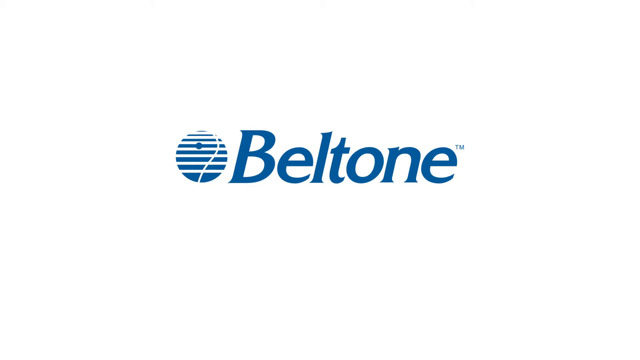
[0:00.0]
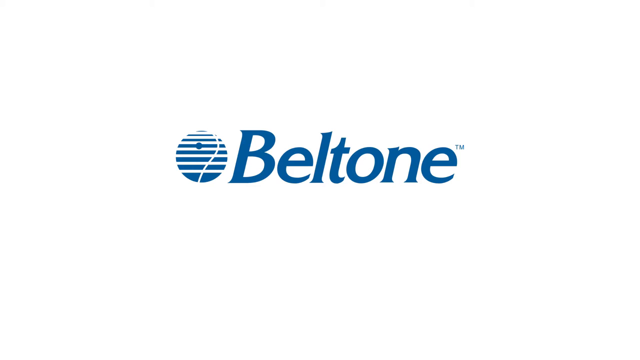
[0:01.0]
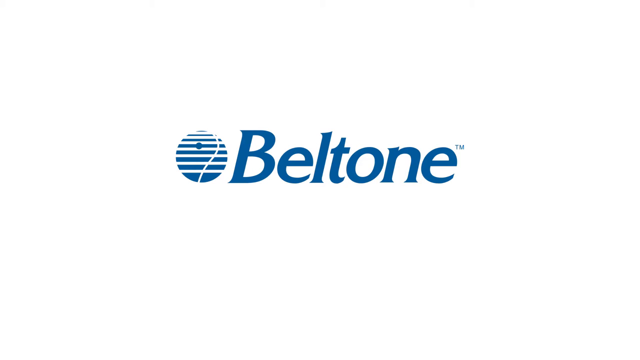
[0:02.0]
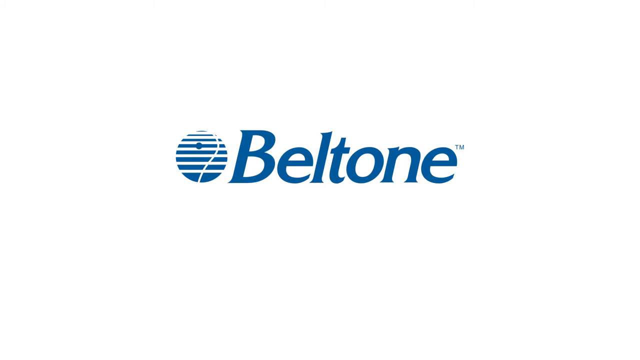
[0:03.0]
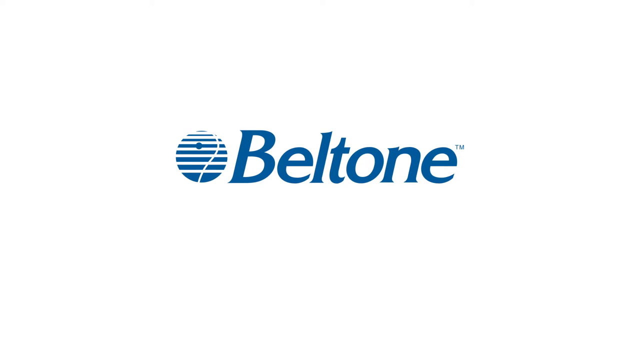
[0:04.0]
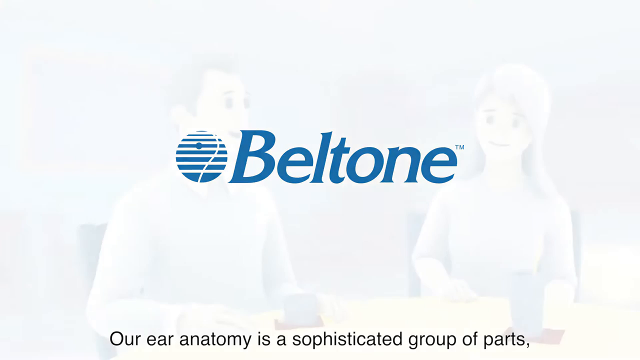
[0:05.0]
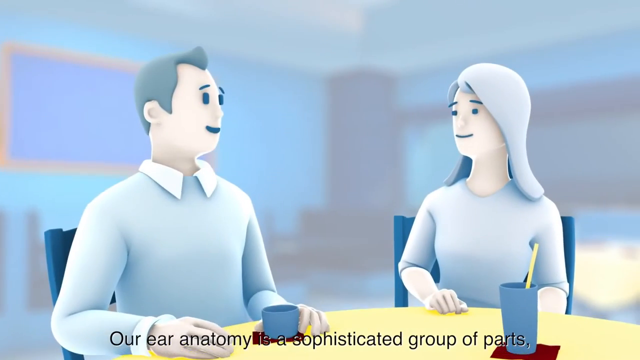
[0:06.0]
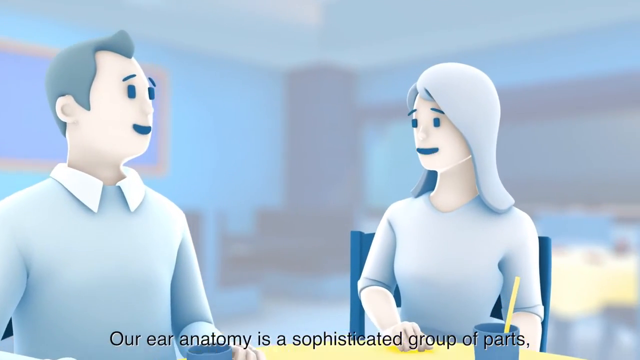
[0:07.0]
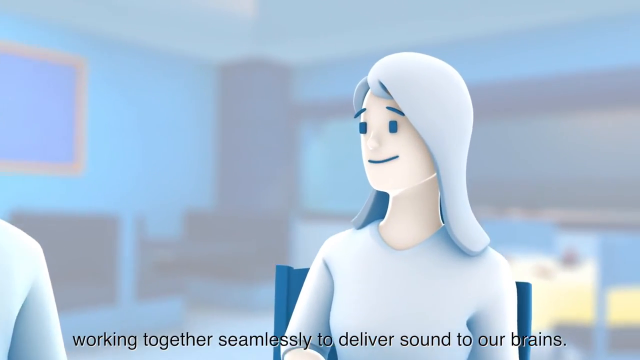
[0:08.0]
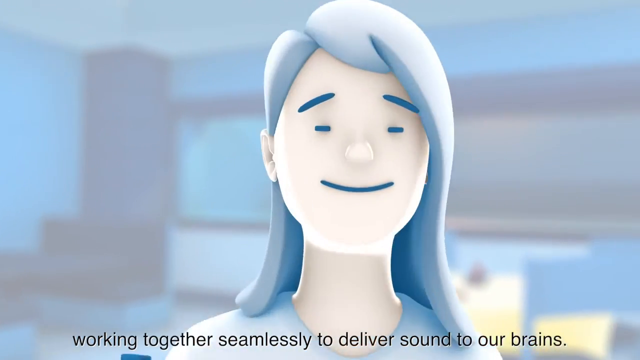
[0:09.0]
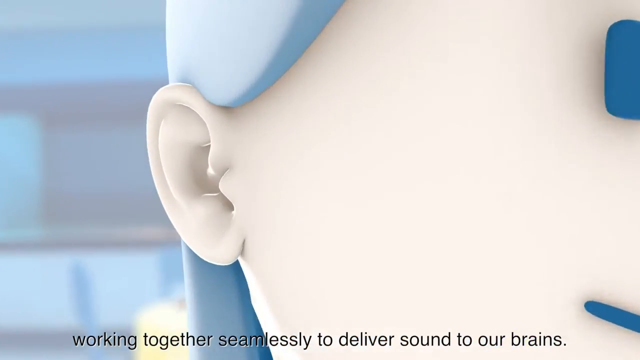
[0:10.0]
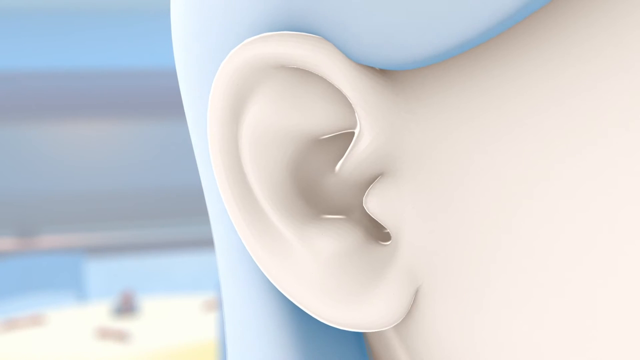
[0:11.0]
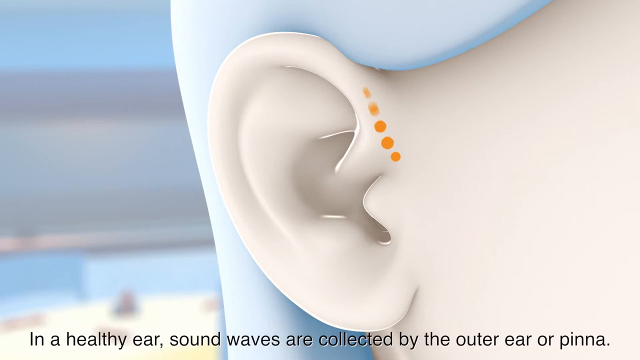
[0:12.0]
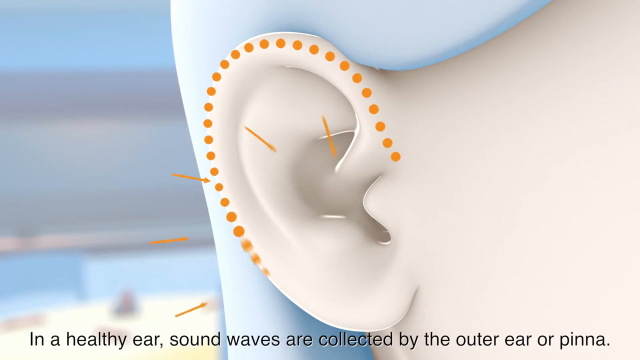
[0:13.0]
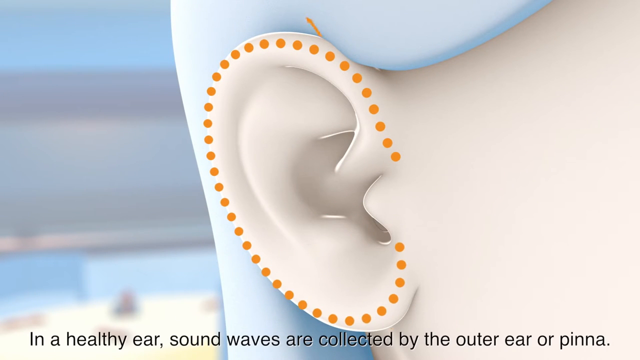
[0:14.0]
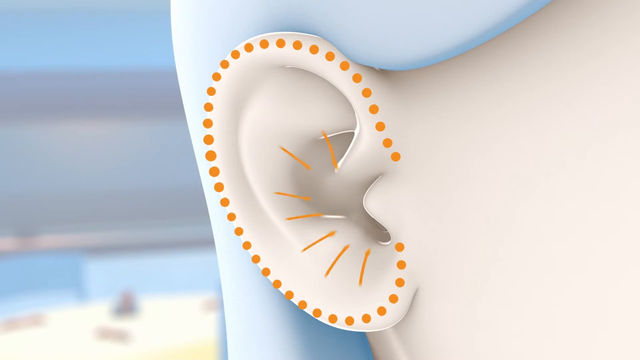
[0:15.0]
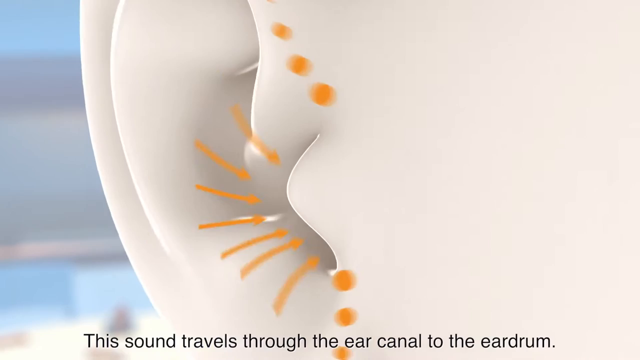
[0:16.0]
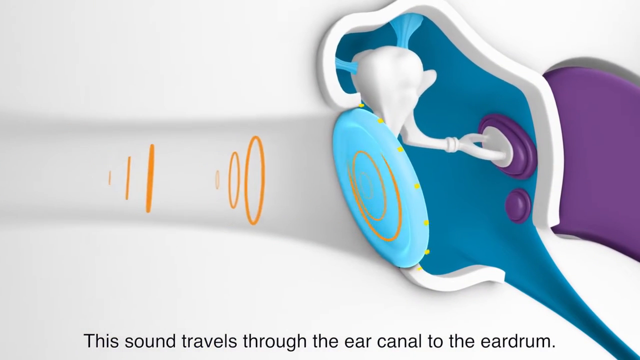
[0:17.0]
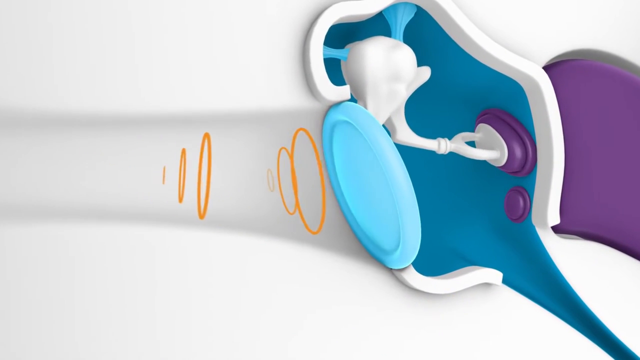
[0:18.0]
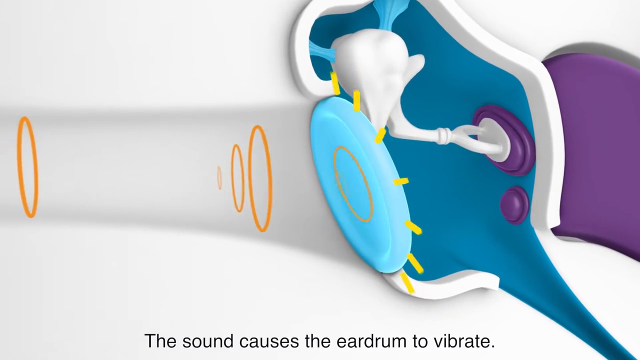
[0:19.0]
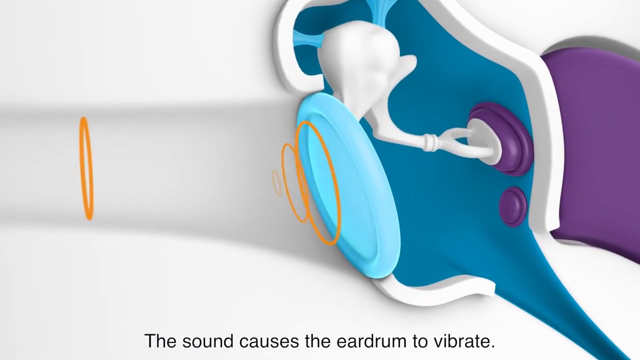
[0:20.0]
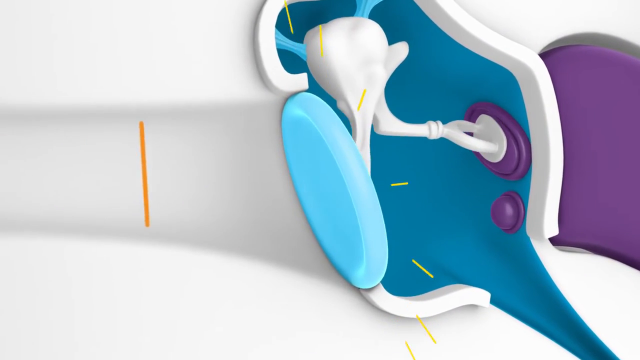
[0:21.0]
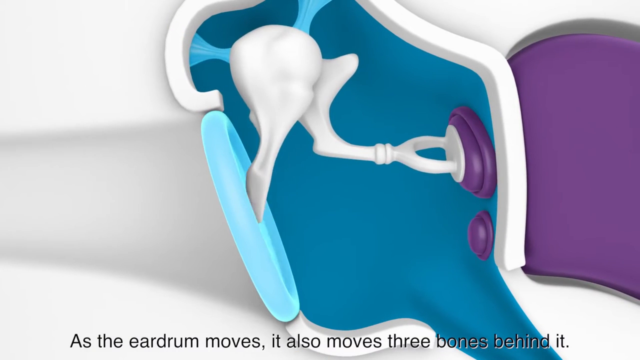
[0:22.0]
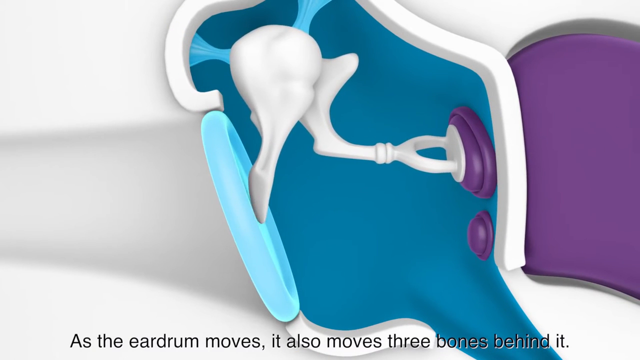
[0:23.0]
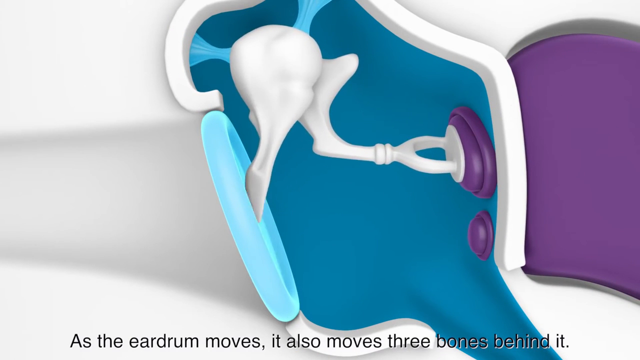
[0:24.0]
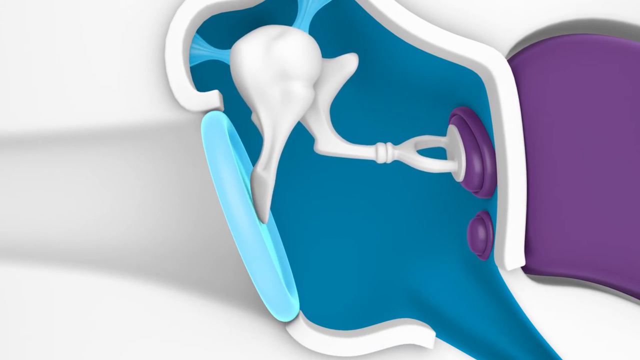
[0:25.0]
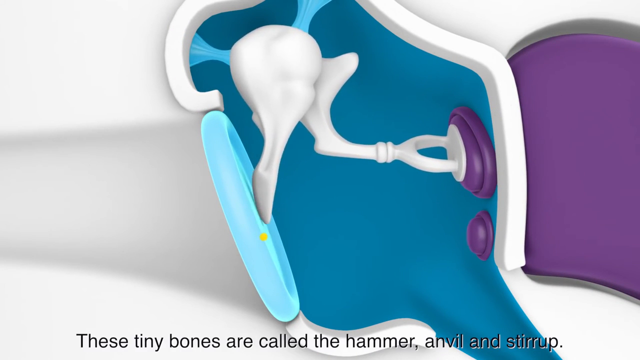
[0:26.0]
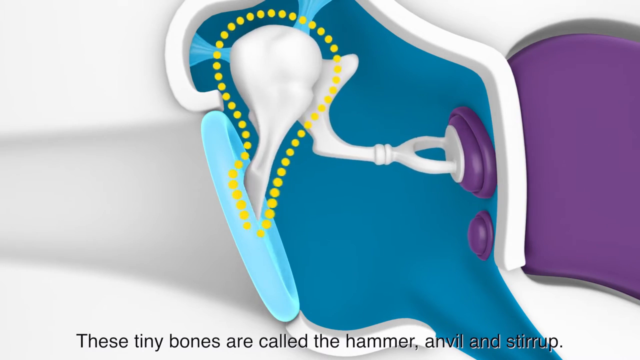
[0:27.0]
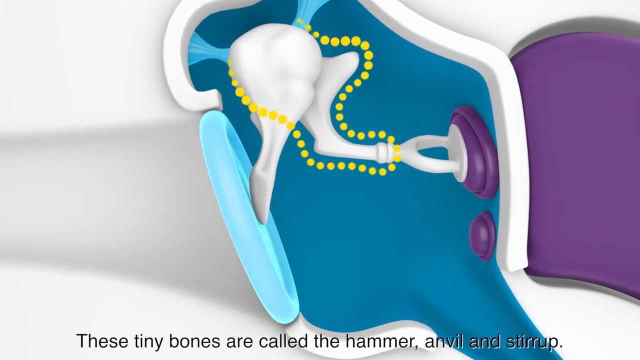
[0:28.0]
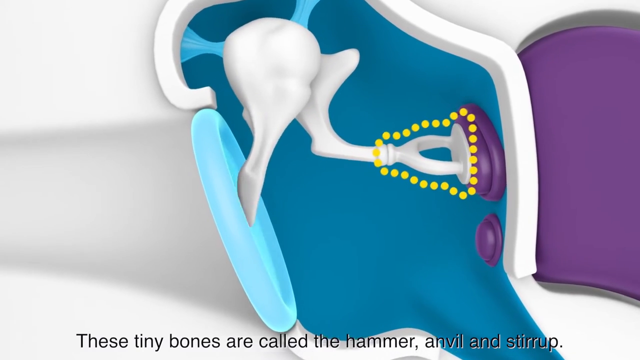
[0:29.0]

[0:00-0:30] The video opens on a white screen with the word "Beltone" in the center in blue font and a circle on the left that is the logo for the brand or company. Then what looks like two people sit at a table and talk. They are animated, a cartoon version created by a computer. A male is on the left and a female is on the right. The male has short, dark hair and wears a collared shirt underneath a sweater. The female has hair down past her shoulders and wears a shirt with sleeves that extend past her elbows. Each has a cup on the table: the female's cup has a straw in it, and the male has what looks like a coffee cup or a mug. They talk to each other, taking turns. The video then goes in and focuses on the female's right ear. Orange dots line up around the outside rim of her ear, with lines going outward, and the view zooms into her ear as if she is hearing things. The orange lines work their way into her inner ear canal. The animation then goes inside her ear, showing its various components, with a hammer, anvil and stirrup, in blue, turquoise, purple and white. The sound coming into her eardrum looks like orange ovals. They go in and hit the eardrum, and each time a sound wave hits the blue drum, yellow bursts shoot outward from it, and it moves the inner bones. The animation highlights the moving bone, which looks like the anvil, and the other bone attached to it, which looks like a stirrup. Yellow highlighting shows the sound waves going from the drum into the anvil and into the stirrup.